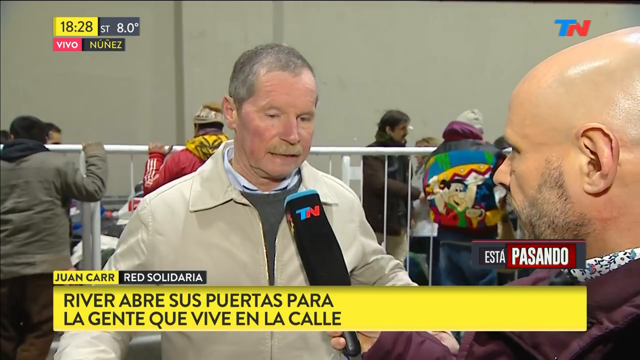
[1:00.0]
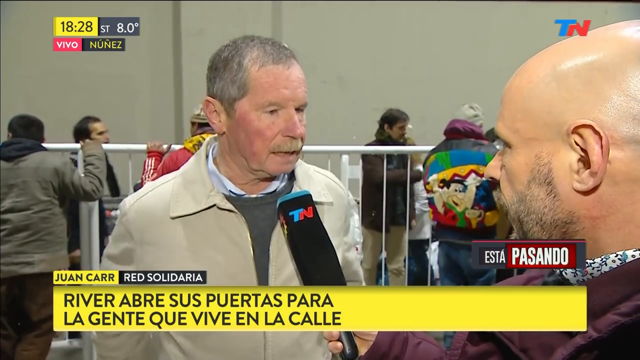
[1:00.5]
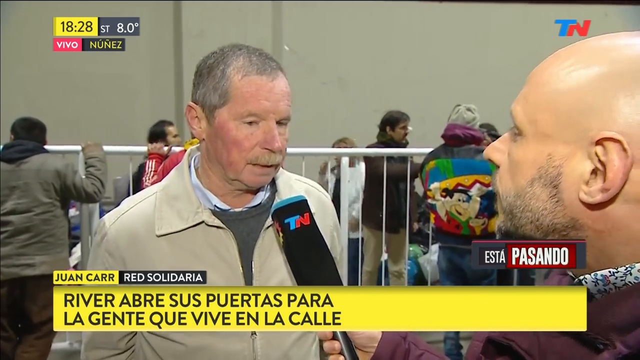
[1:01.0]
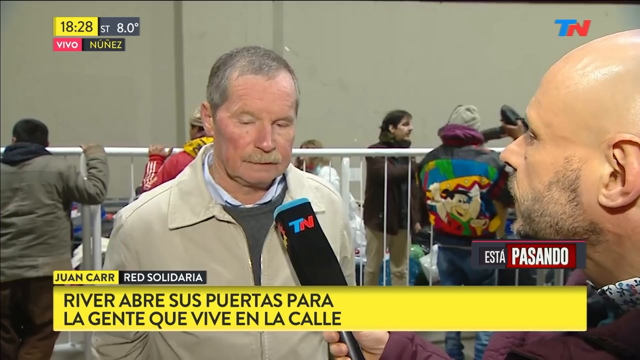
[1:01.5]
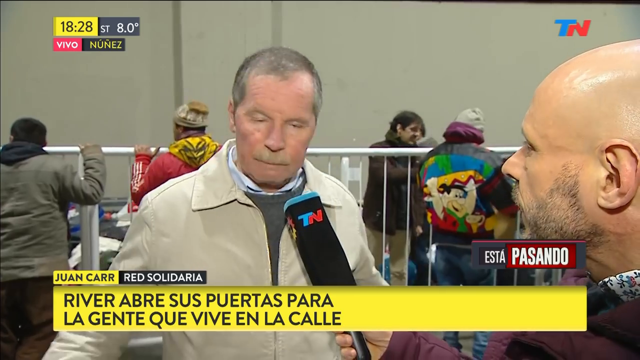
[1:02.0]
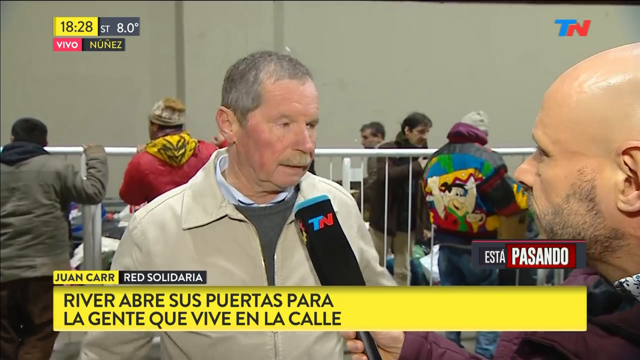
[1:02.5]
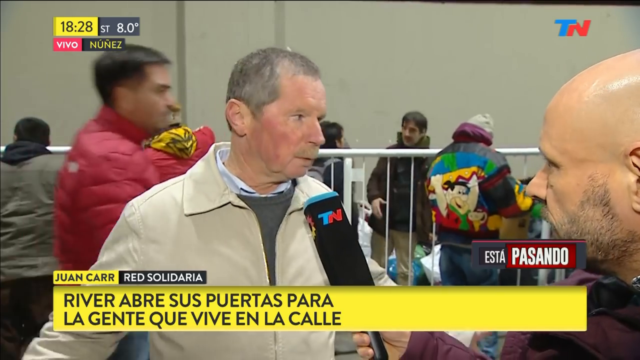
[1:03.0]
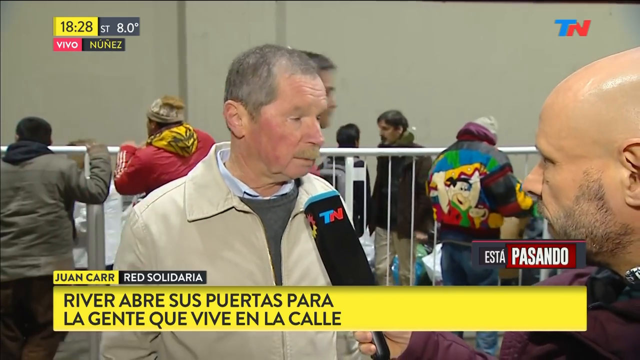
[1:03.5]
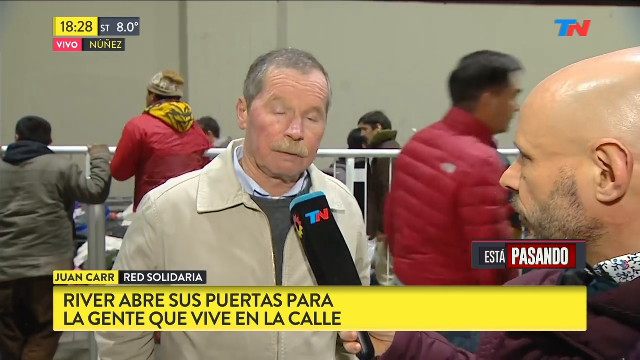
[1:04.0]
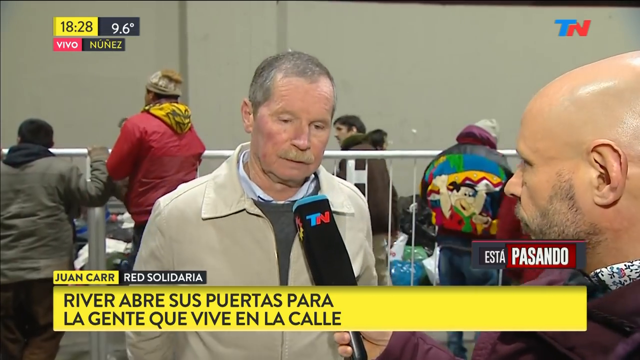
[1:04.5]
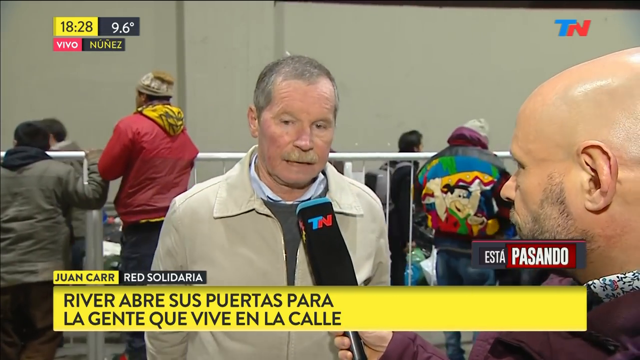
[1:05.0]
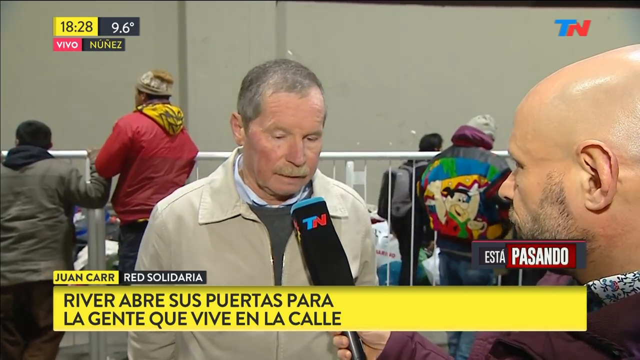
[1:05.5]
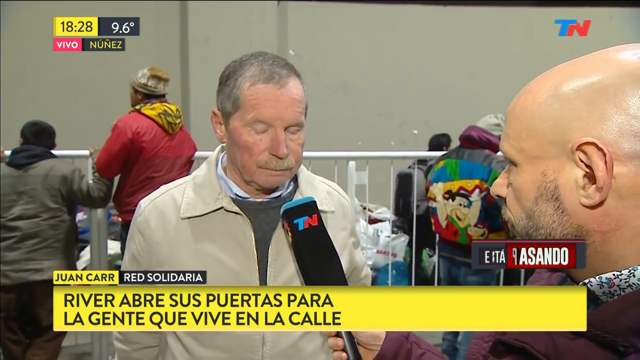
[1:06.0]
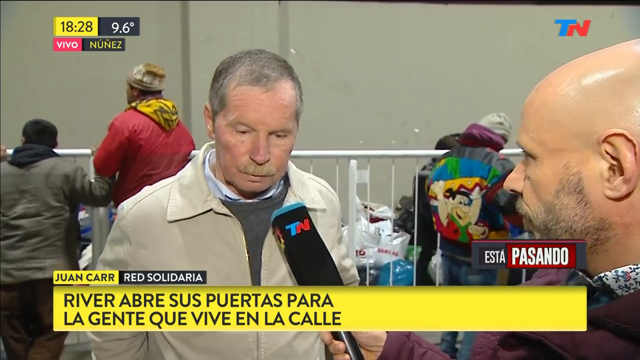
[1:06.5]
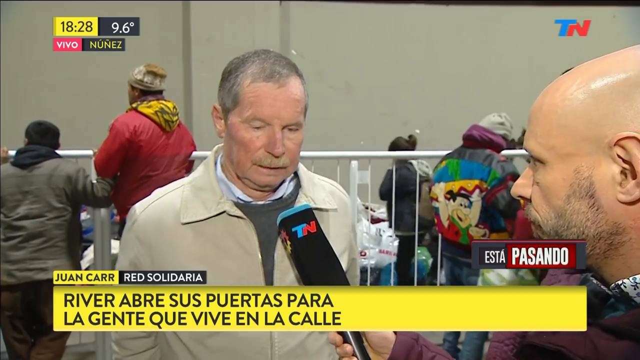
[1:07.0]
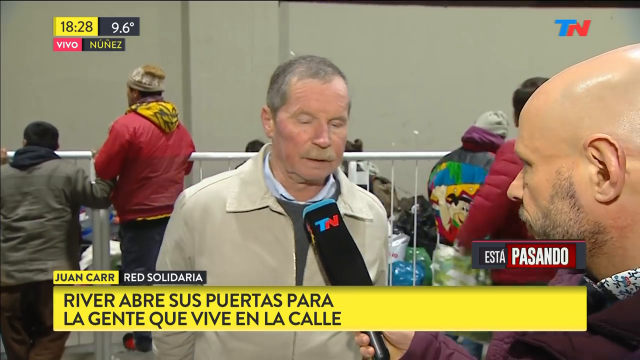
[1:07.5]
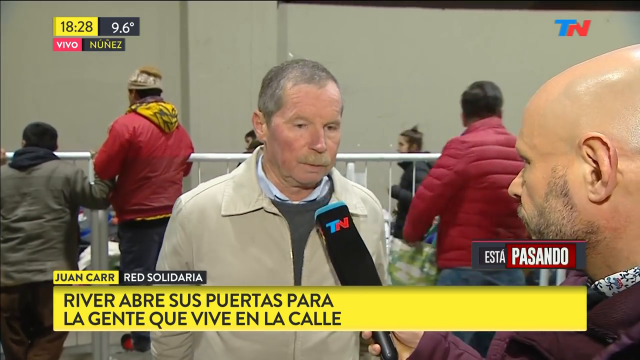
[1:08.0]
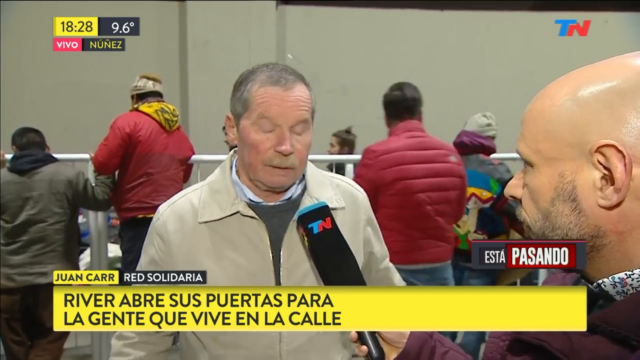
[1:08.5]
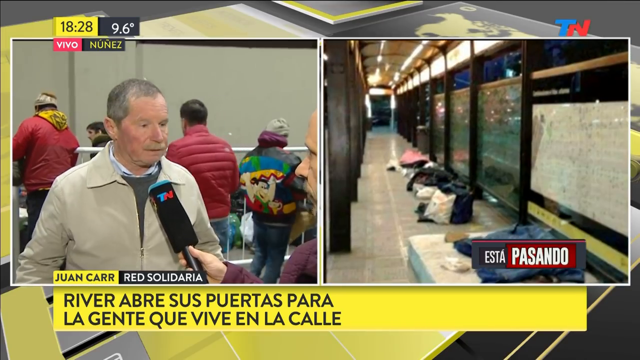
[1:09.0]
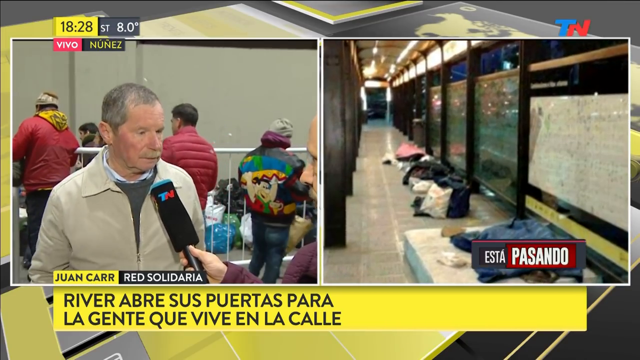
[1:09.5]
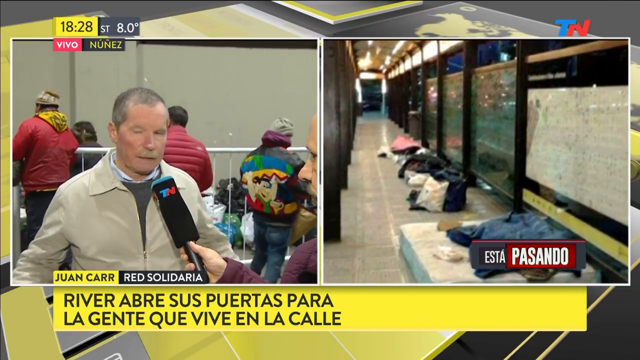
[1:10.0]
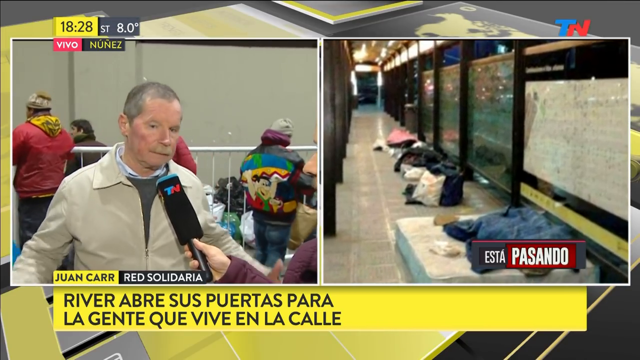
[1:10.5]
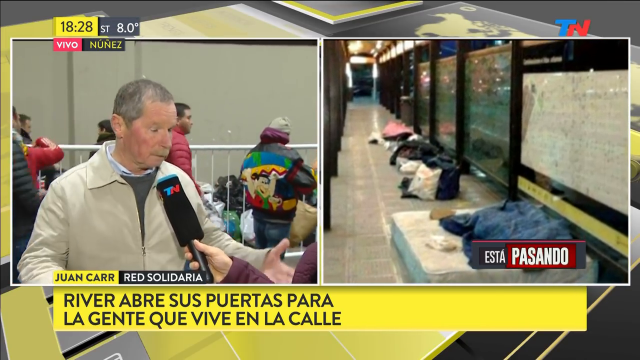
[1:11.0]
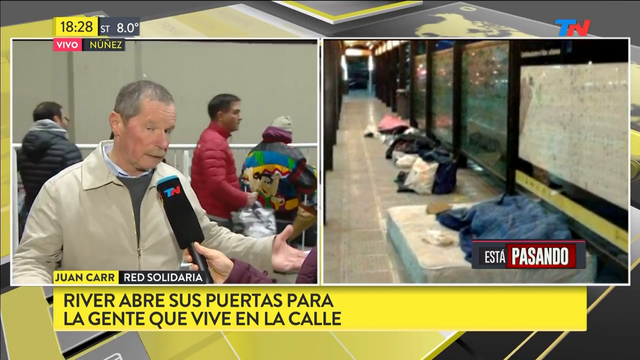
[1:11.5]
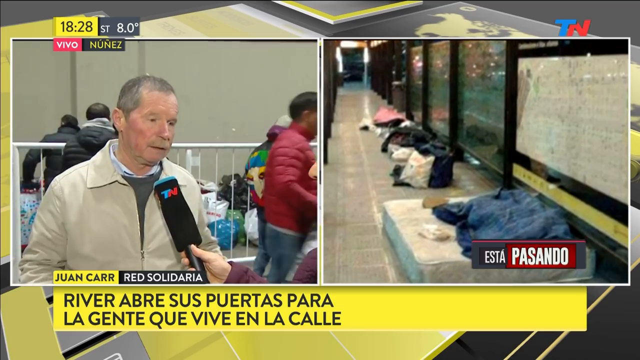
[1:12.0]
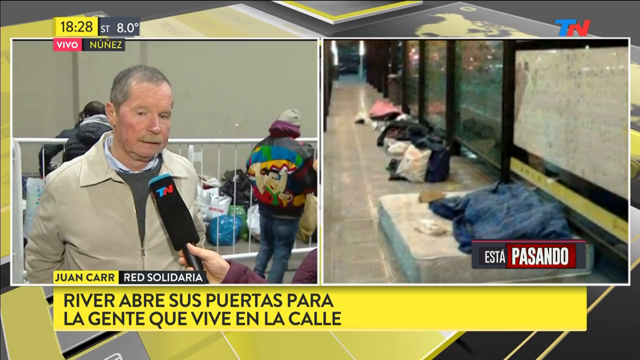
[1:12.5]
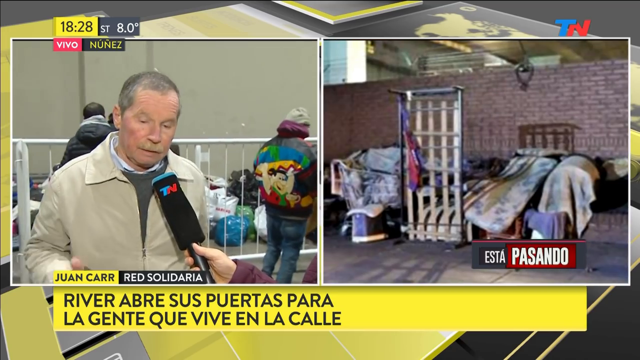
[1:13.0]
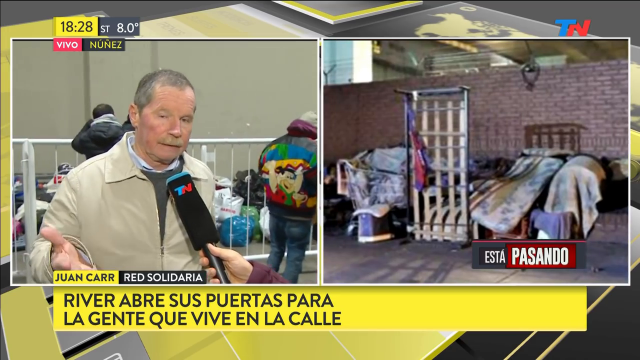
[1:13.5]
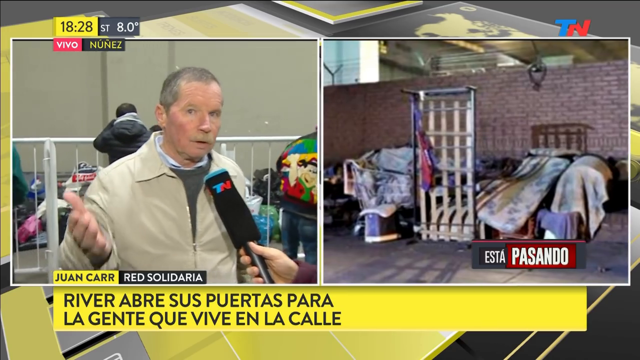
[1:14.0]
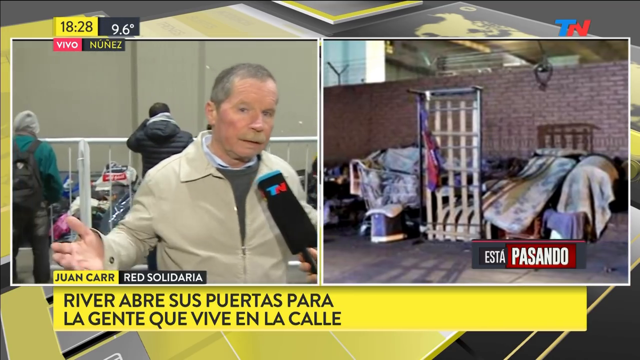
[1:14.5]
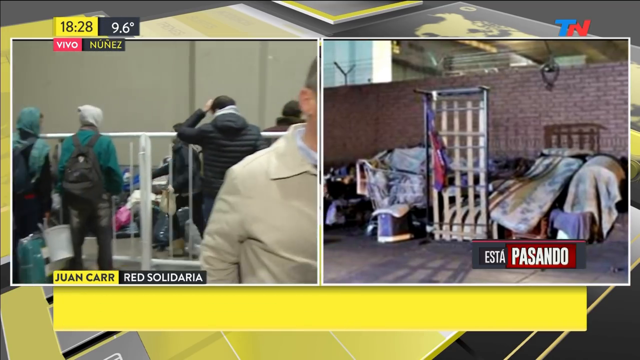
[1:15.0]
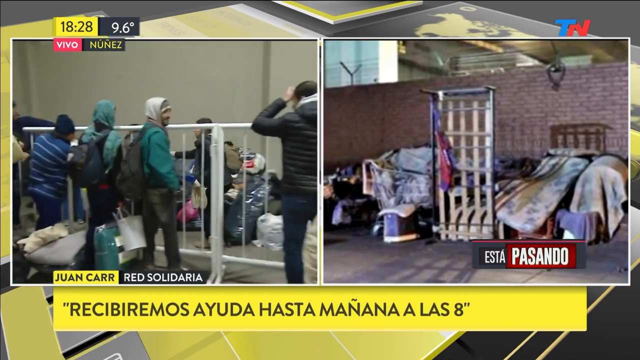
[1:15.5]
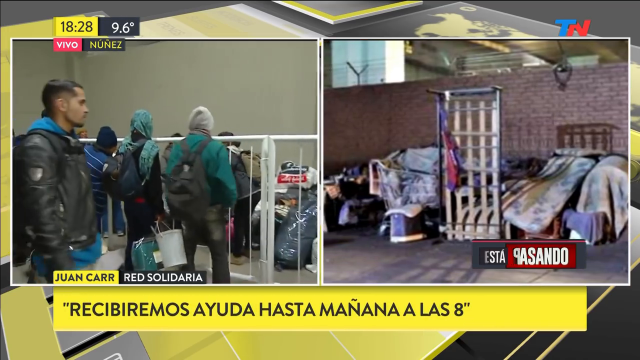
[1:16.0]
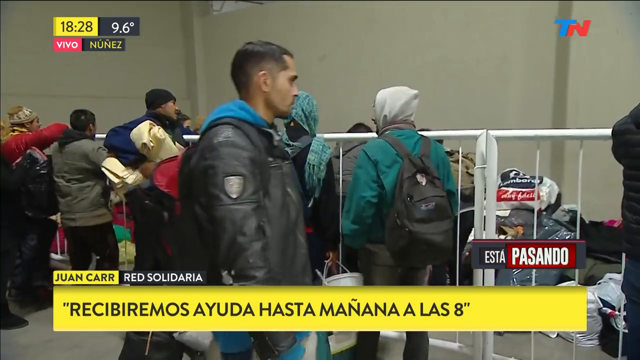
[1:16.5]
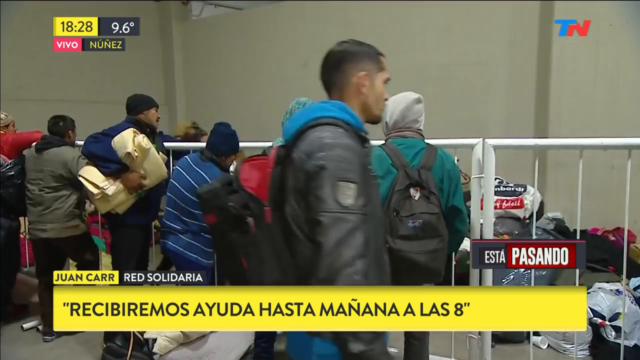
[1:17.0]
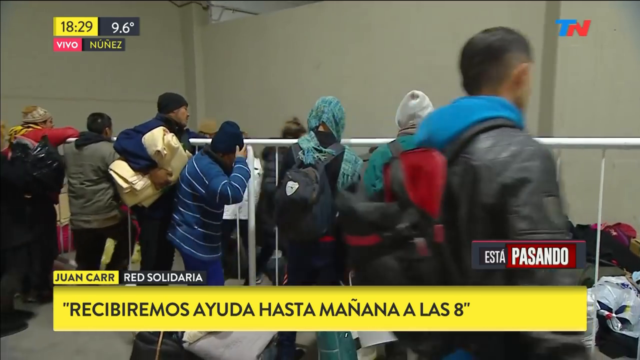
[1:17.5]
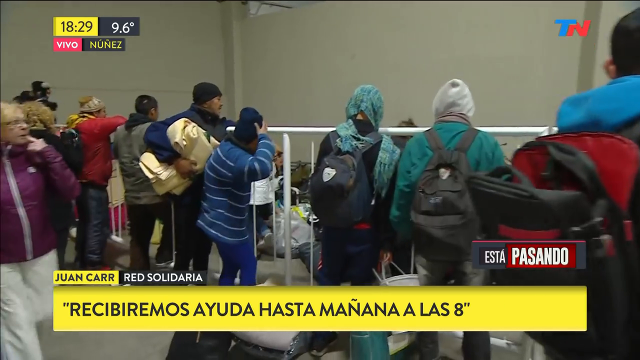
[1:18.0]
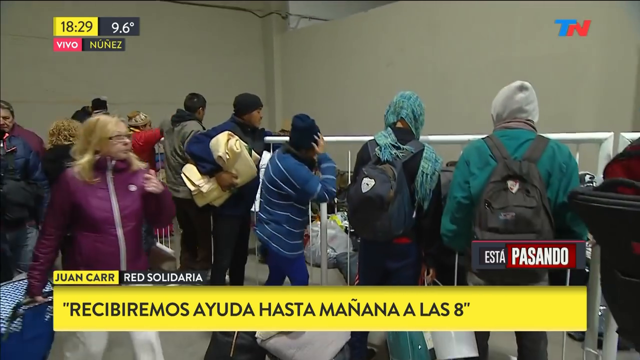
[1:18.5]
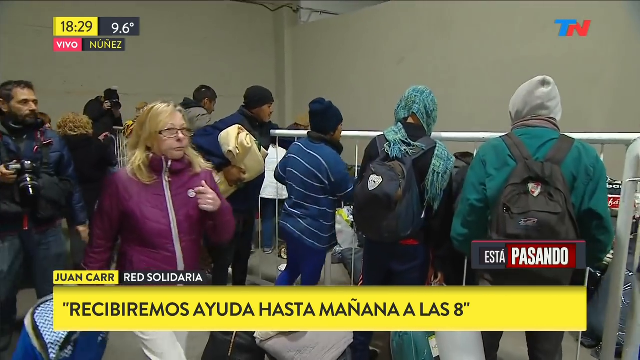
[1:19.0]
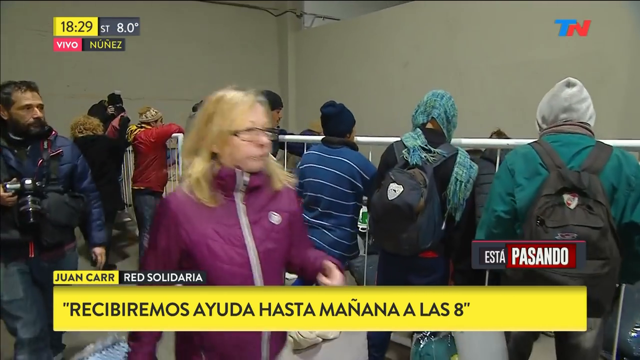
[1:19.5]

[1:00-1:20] The interview continues. At the bottom of the screen, black letters on a yellow background read "river opens the doors to everyone who lives on the street." People pass in the background while others focus on what they are doing there; most of them seem to be men. The footage of homeless people is shown again, with people sleeping on the street: one has a mattress, while others next to him do not.